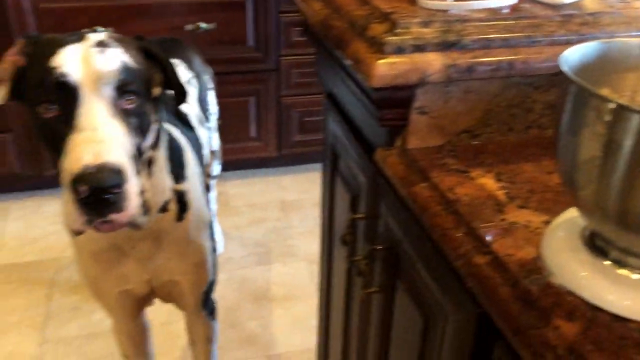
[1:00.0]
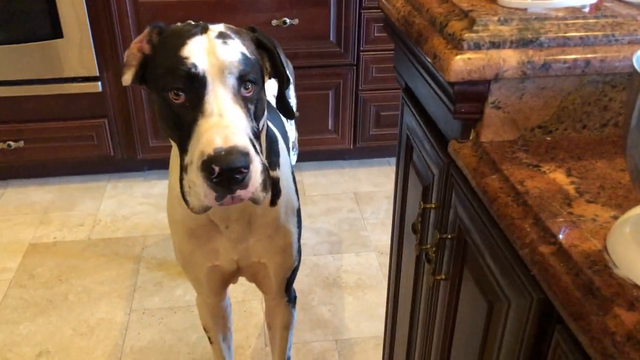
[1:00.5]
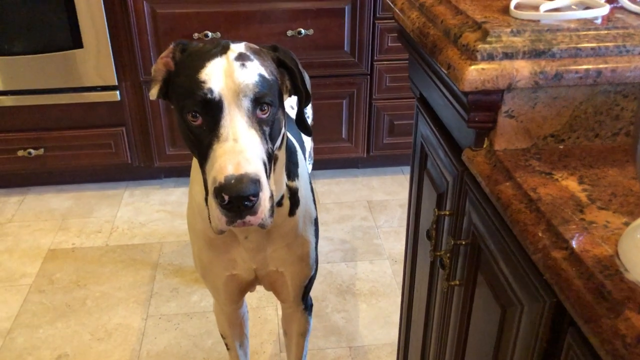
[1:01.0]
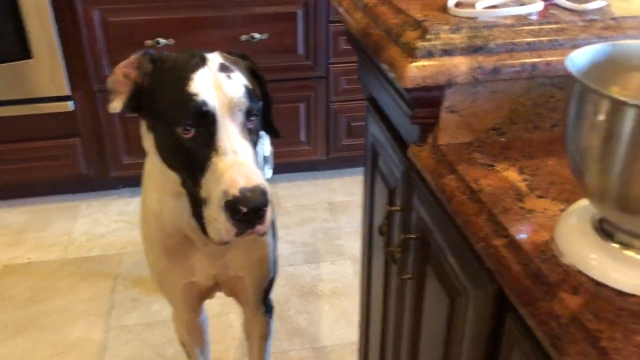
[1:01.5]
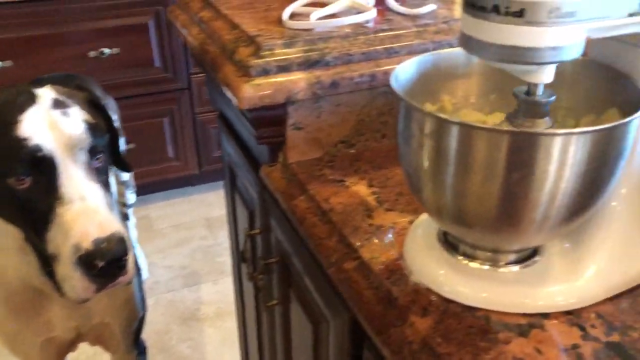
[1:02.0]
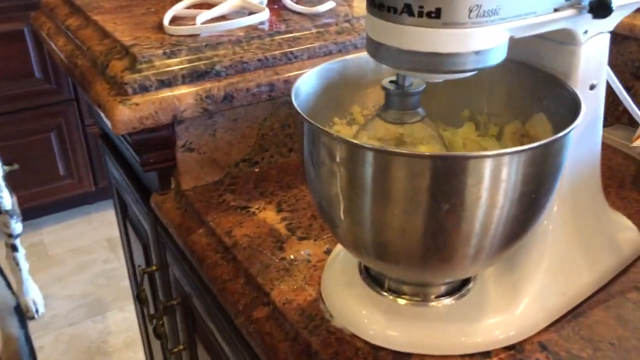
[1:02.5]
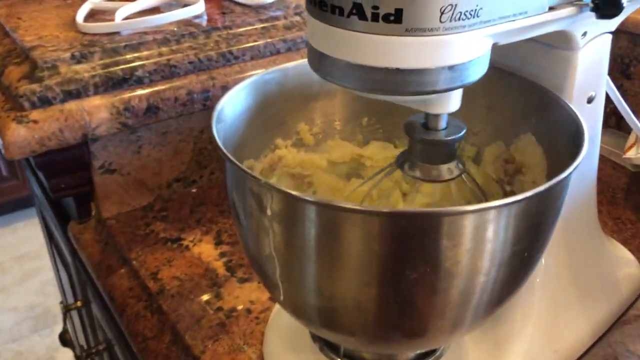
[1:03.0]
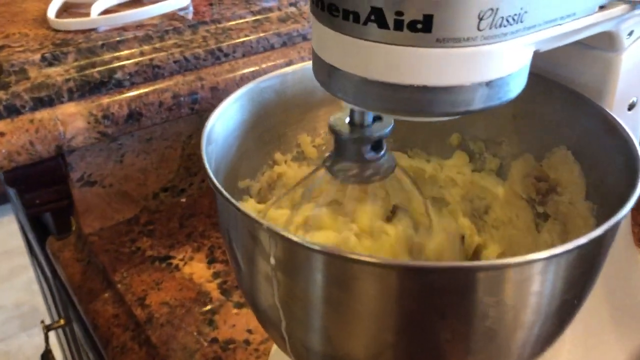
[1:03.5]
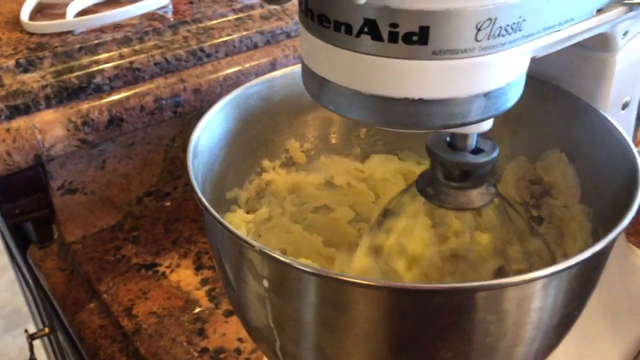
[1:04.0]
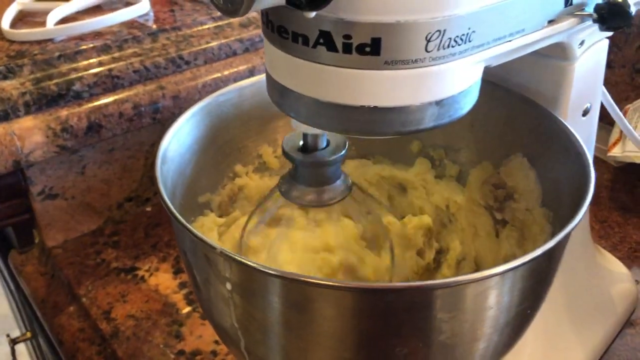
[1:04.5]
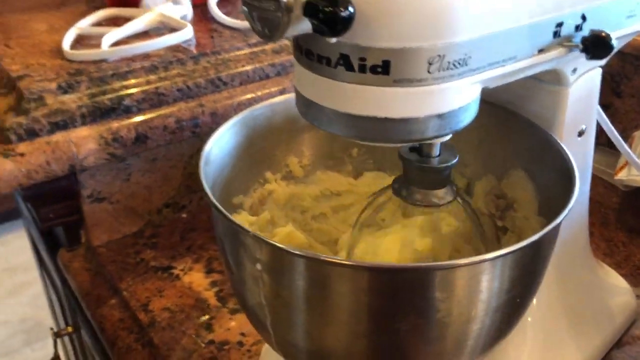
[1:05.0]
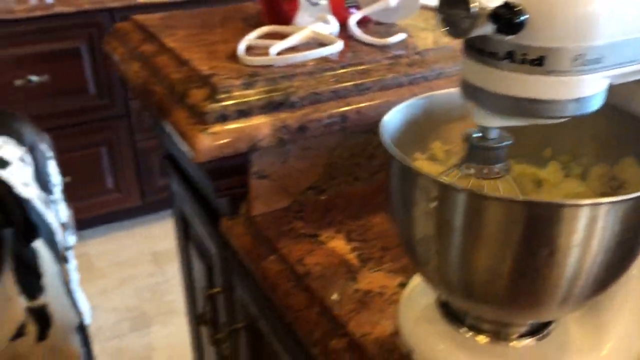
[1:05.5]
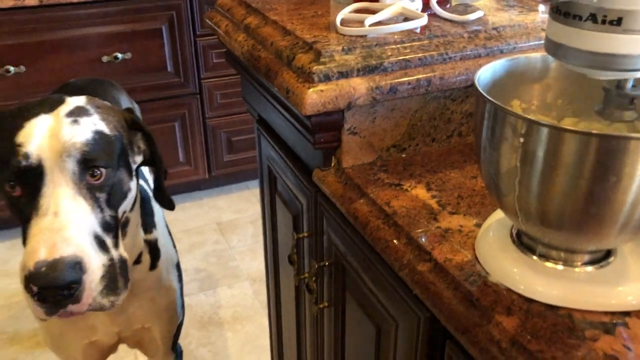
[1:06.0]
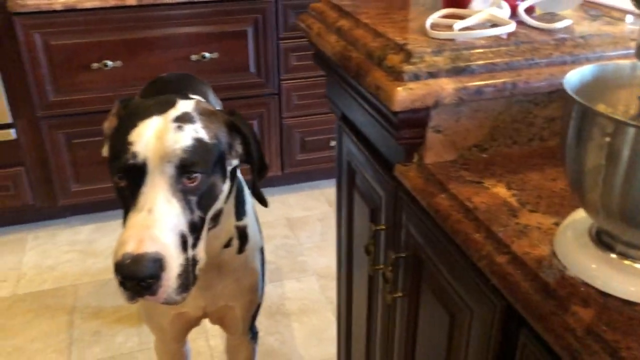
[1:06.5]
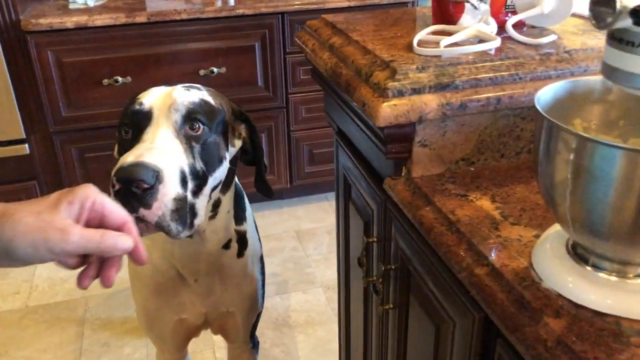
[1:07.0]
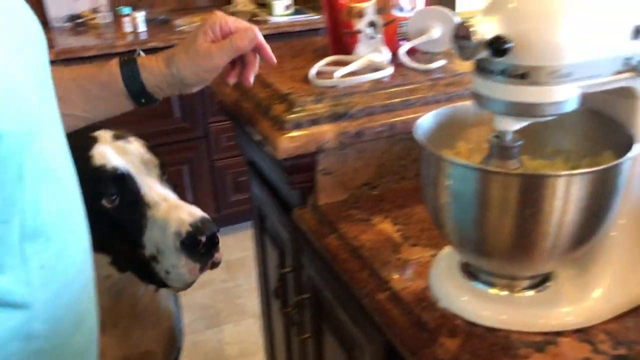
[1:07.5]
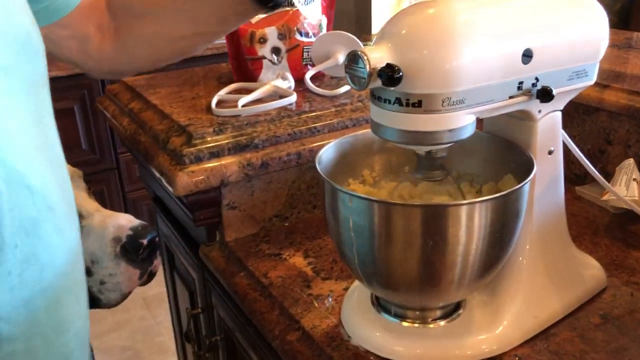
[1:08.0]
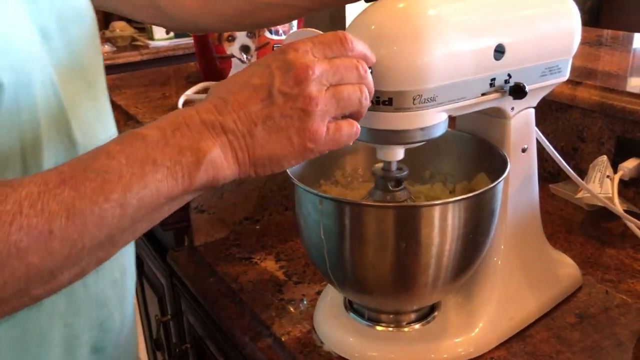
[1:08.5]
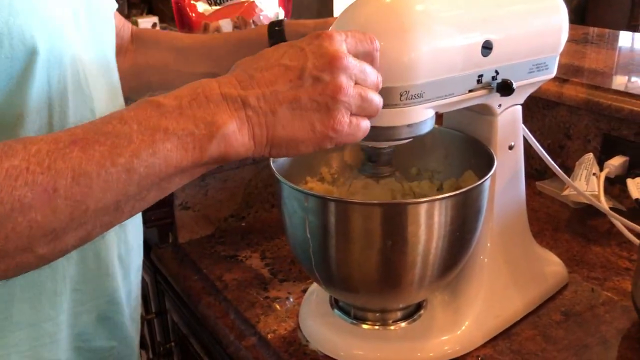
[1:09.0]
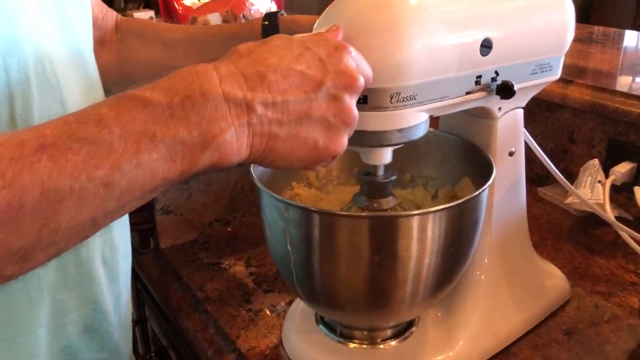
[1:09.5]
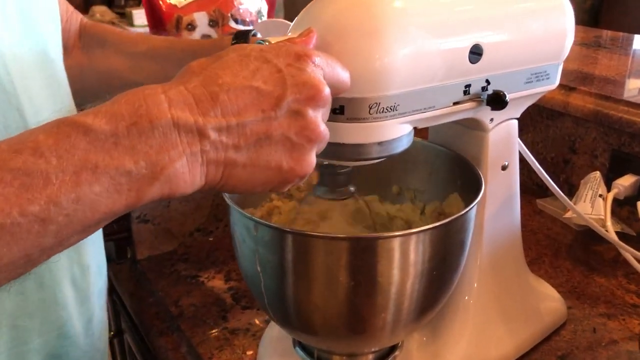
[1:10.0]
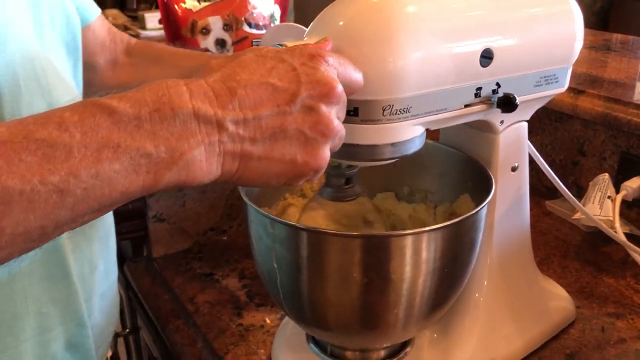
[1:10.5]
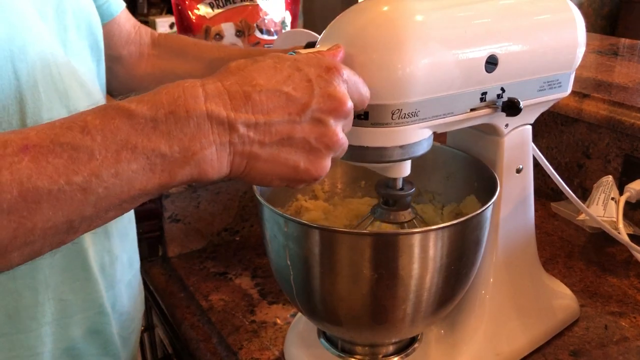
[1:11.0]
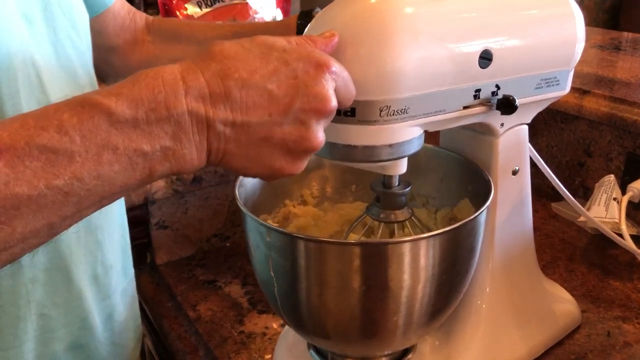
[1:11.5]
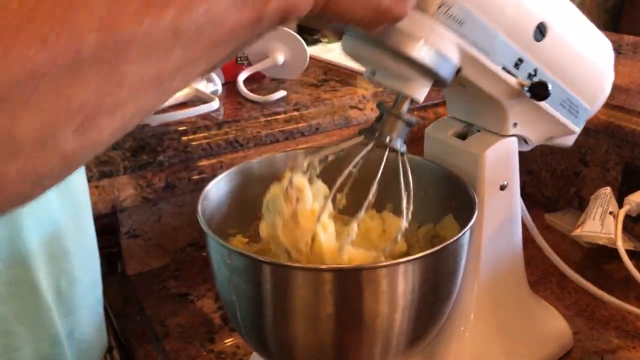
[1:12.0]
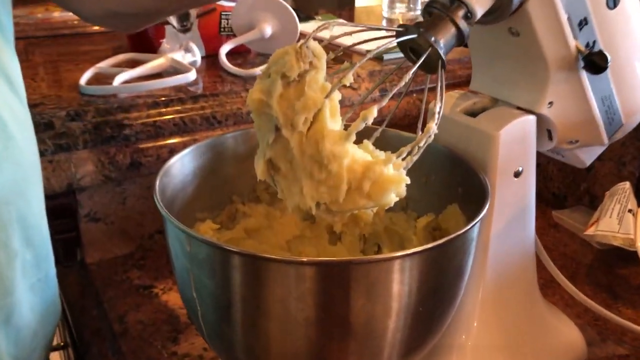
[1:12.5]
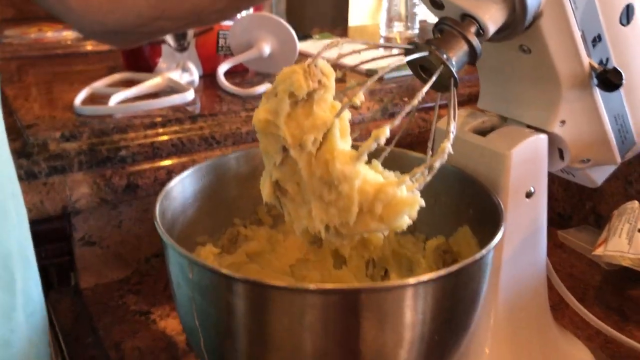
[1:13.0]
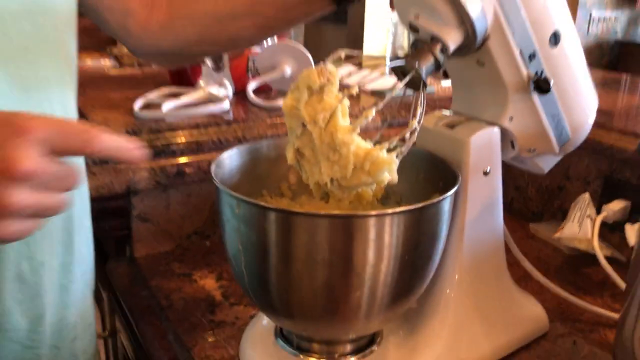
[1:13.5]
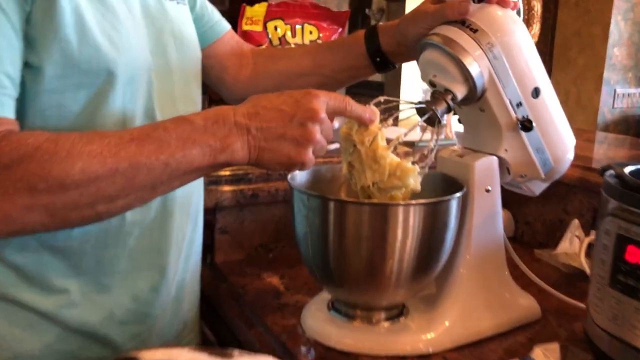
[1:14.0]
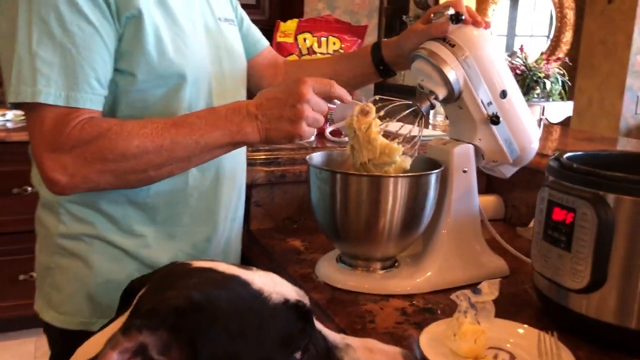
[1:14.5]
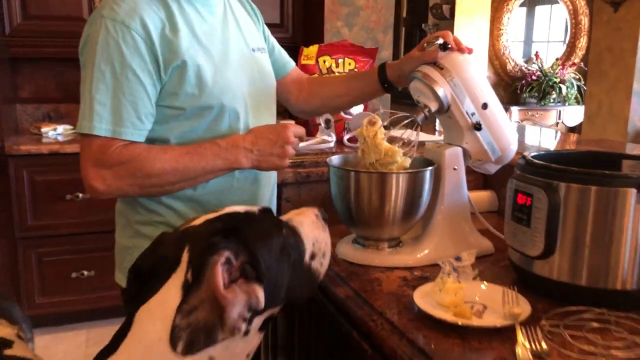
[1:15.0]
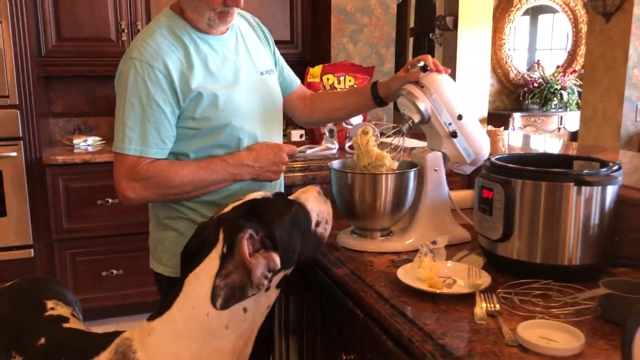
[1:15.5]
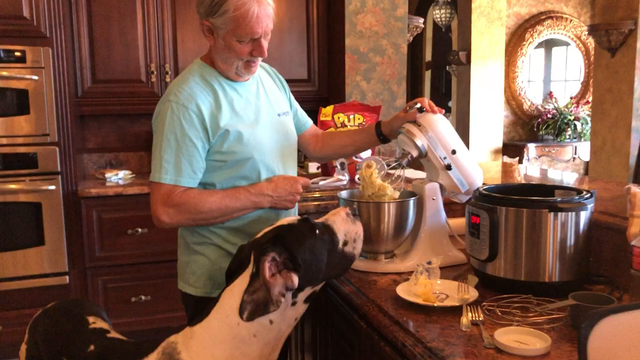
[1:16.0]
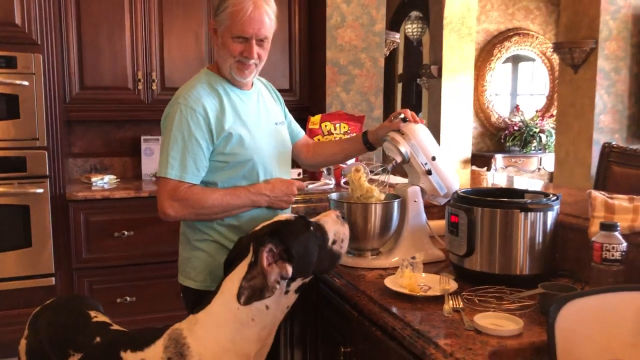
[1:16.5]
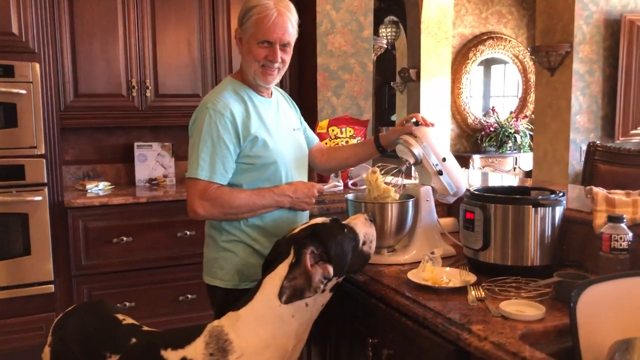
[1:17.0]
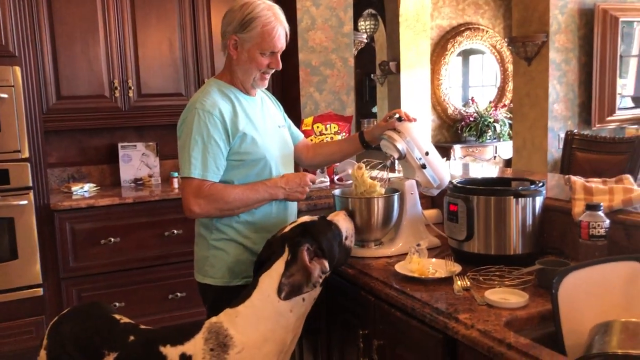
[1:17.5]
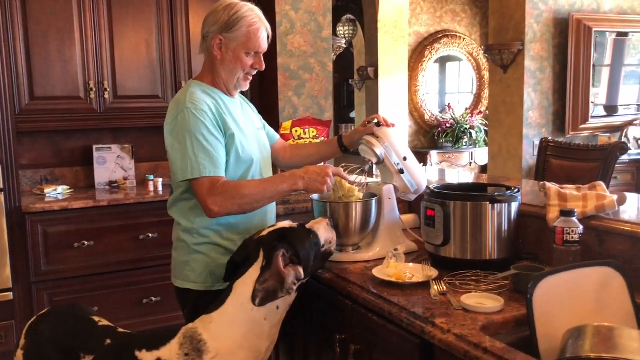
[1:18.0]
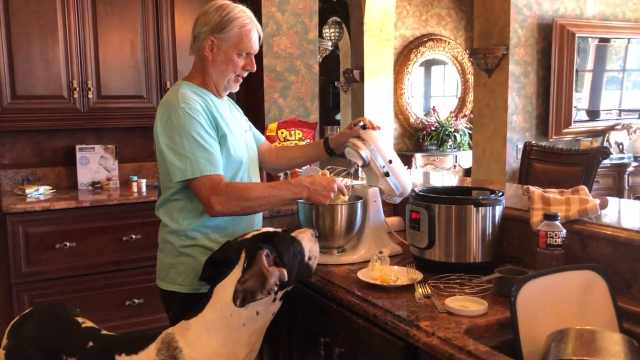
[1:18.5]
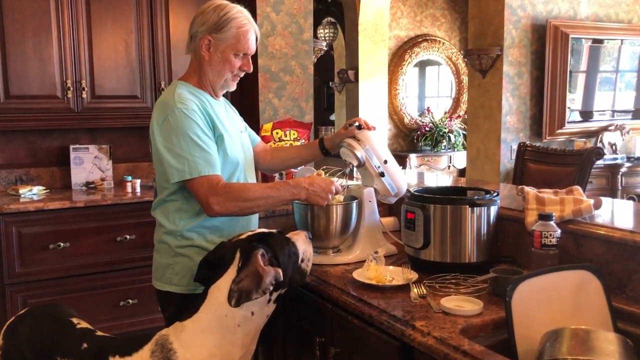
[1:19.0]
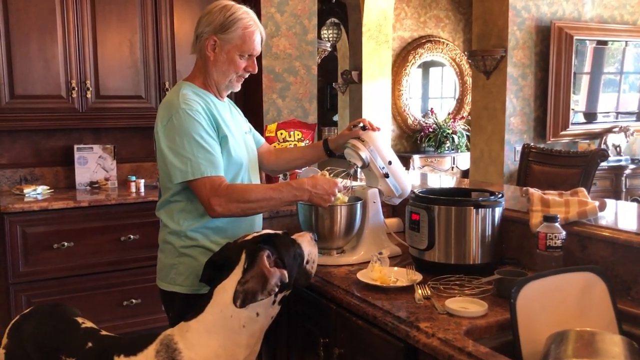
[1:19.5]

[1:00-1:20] The black and white dog appears first, about to play with the Caucasian man's hand. The camera pans to the electrical whisk, which continues whisking the mashed potatoes. The potatoes look ready, having apparently reached the desired consistency and texture. The man, wearing a light blue t-shirt, approaches the whisk, stops it by grabbing a black knob or button at the front, and lifts the whisk up. He dips his finger into the steaming hot mashed potatoes and tastes them. As he does, the dog moves from behind him to in front of him, trying to get a sniff or possibly a taste. Someone is clearly holding the camera. New cupboards come into view, along with a two-door glass oven.